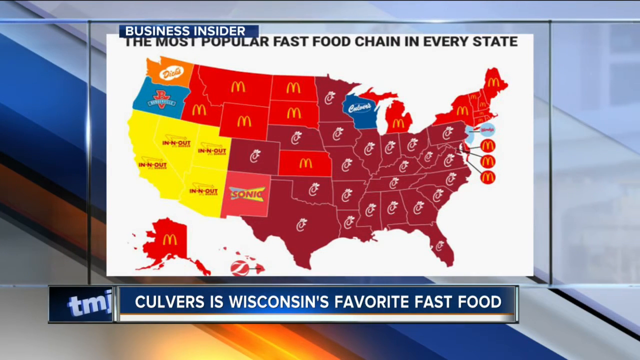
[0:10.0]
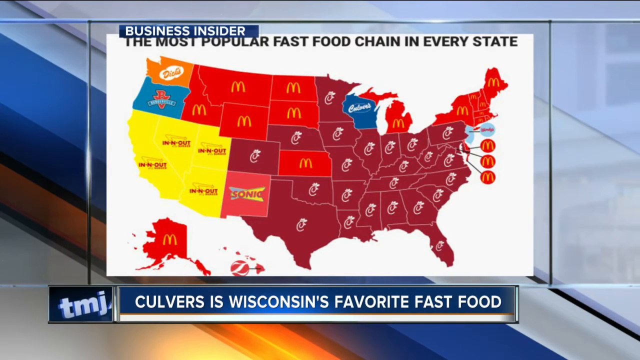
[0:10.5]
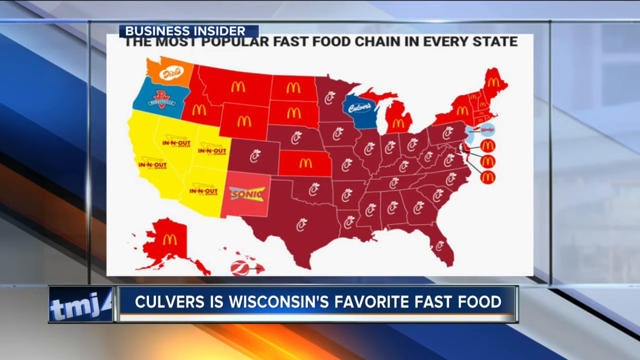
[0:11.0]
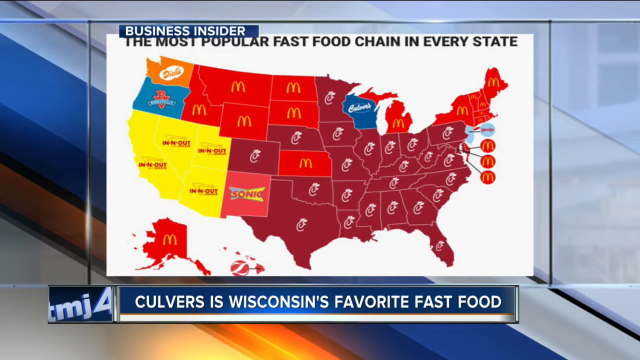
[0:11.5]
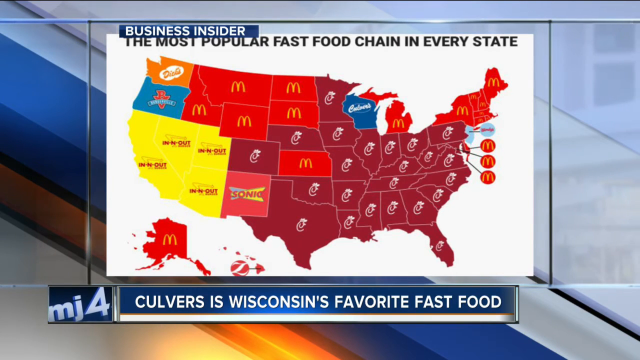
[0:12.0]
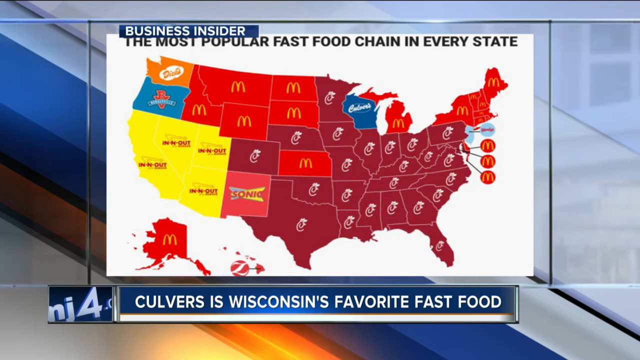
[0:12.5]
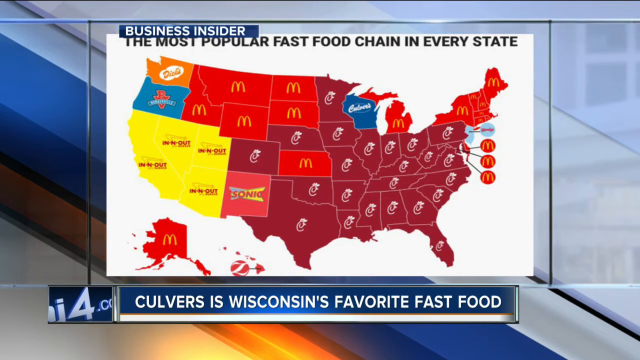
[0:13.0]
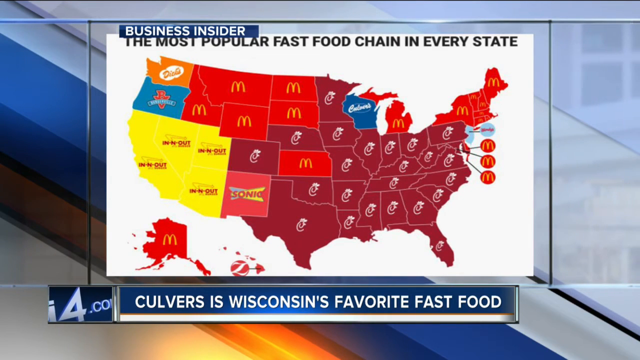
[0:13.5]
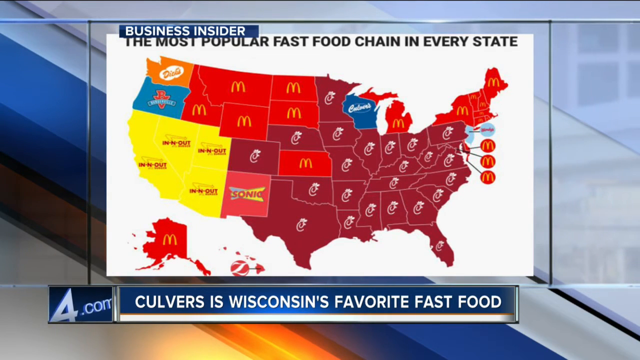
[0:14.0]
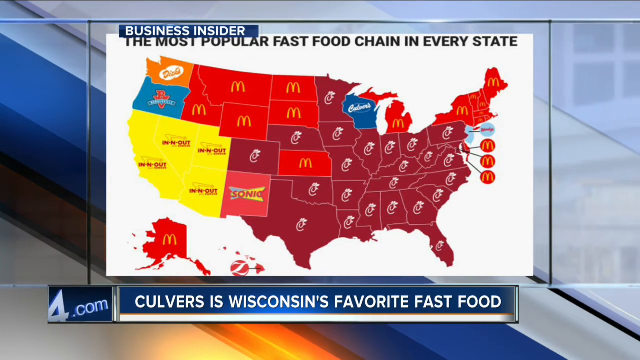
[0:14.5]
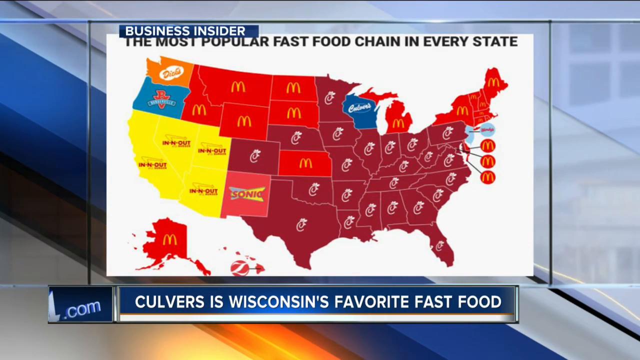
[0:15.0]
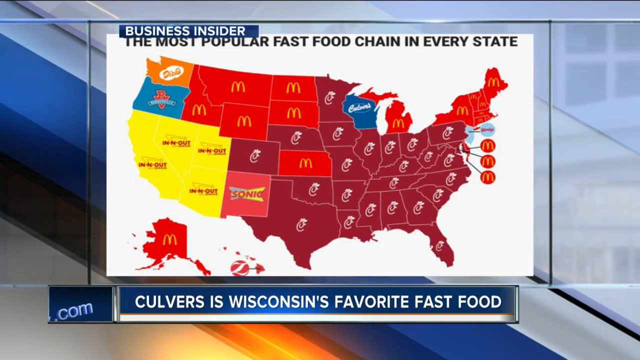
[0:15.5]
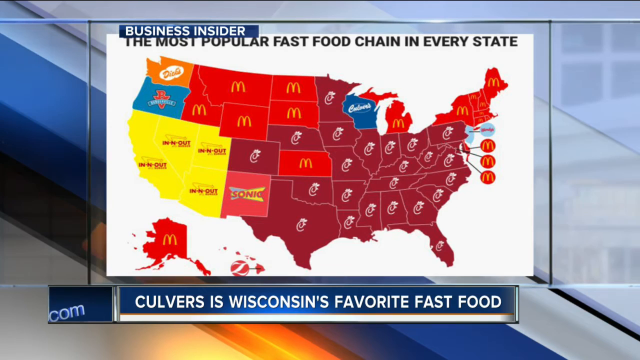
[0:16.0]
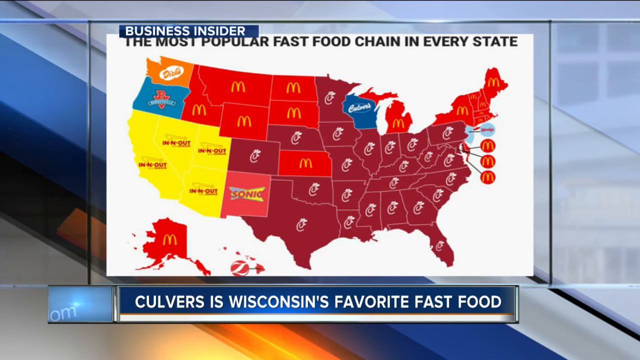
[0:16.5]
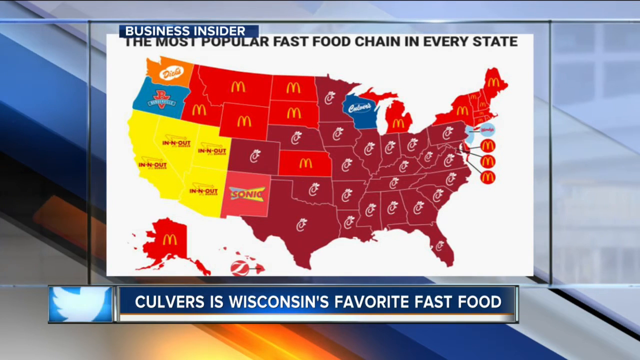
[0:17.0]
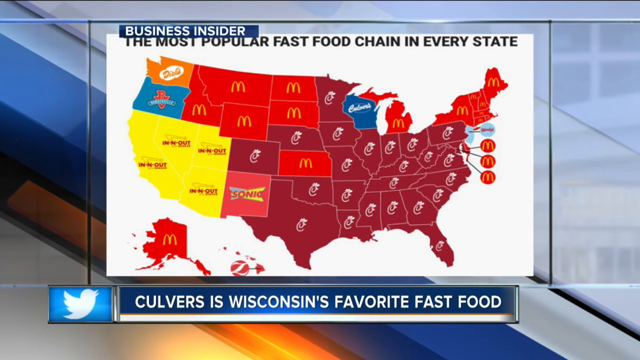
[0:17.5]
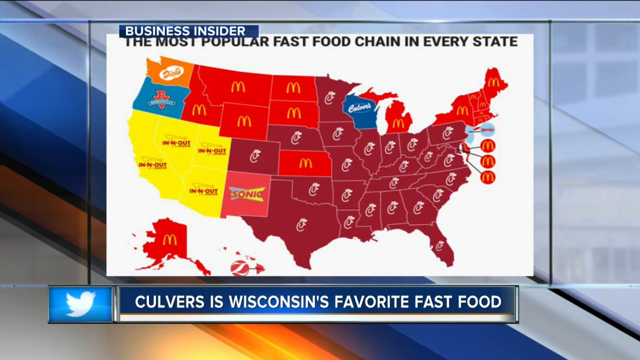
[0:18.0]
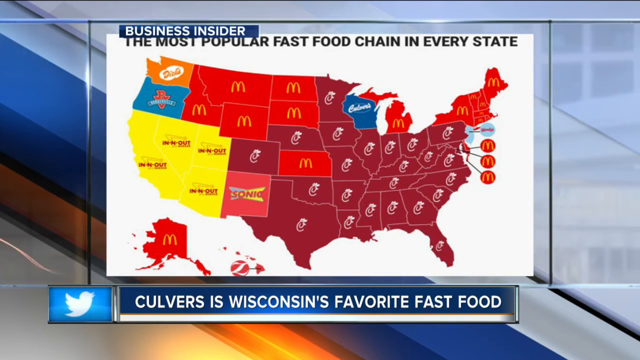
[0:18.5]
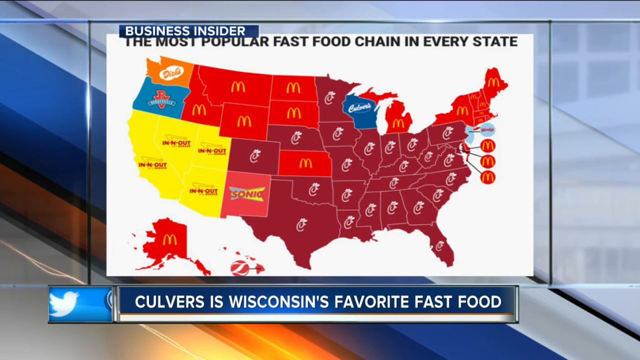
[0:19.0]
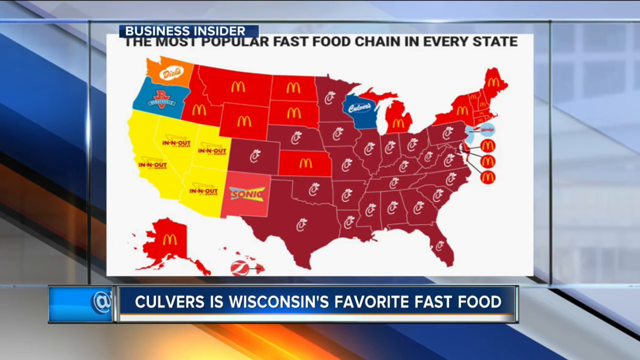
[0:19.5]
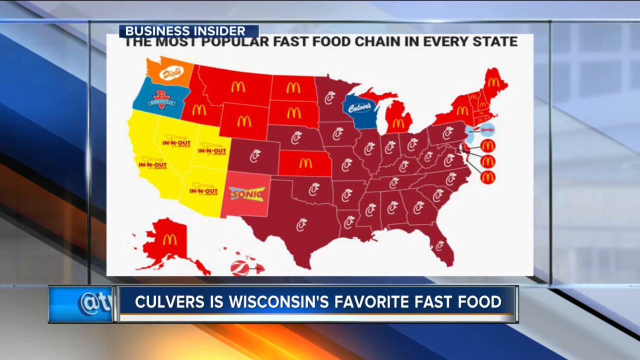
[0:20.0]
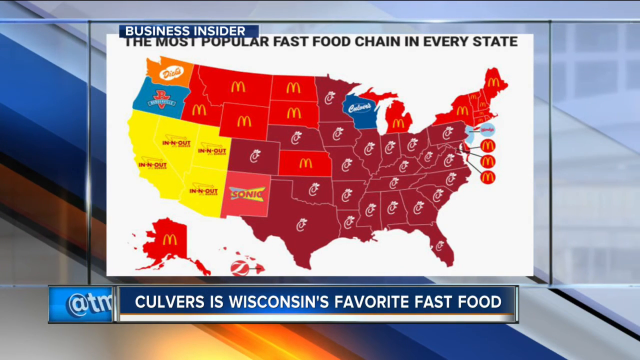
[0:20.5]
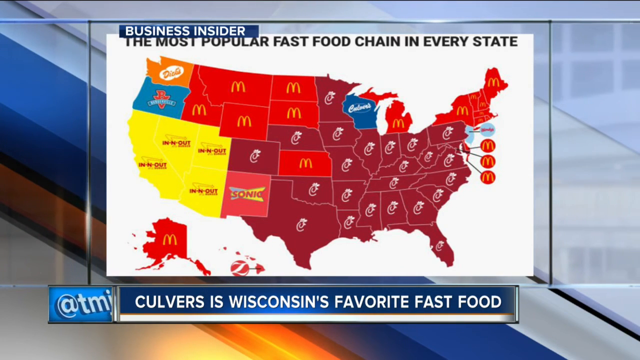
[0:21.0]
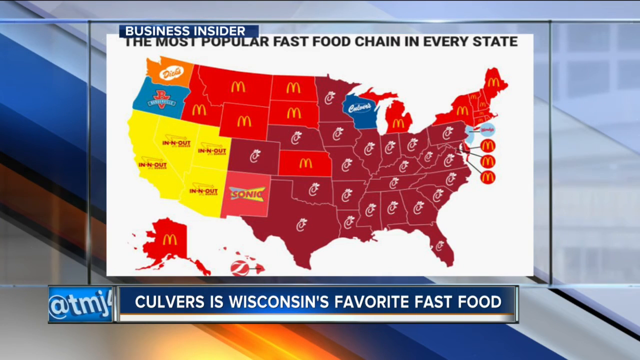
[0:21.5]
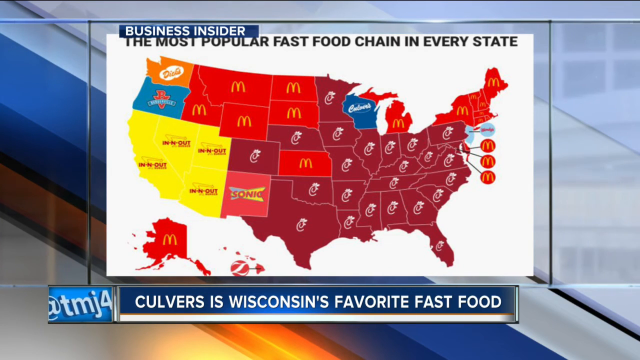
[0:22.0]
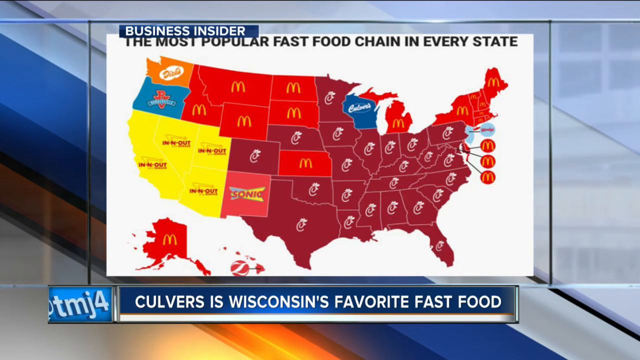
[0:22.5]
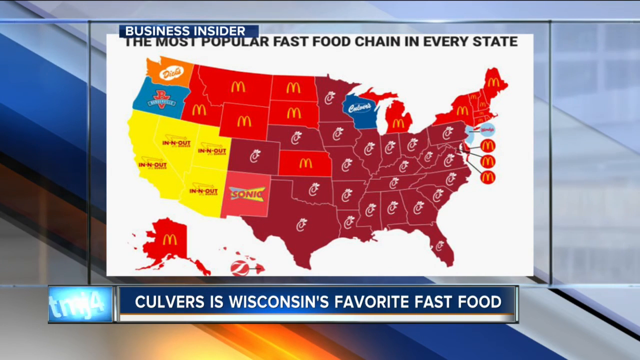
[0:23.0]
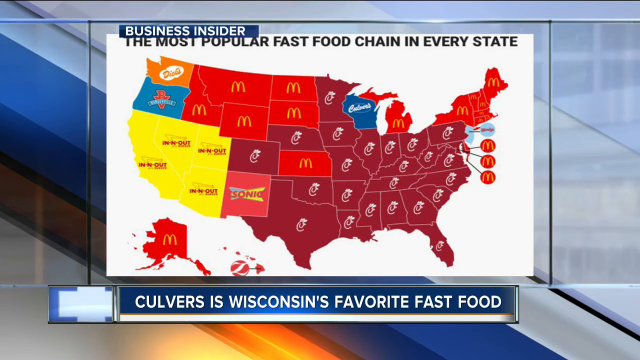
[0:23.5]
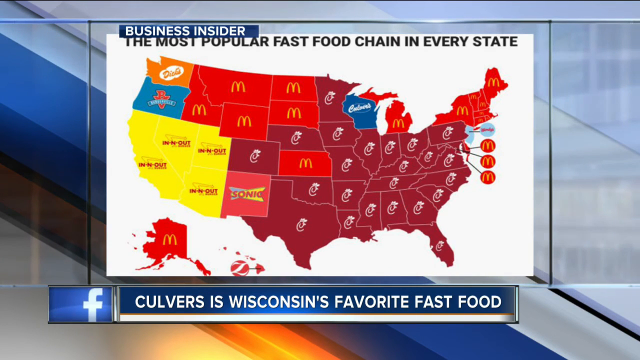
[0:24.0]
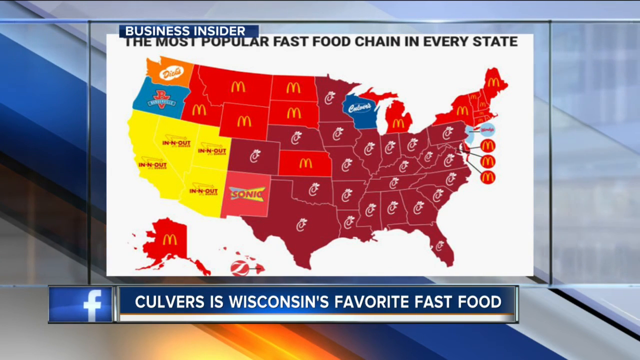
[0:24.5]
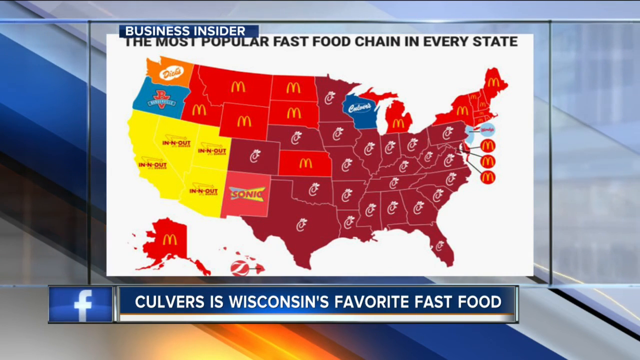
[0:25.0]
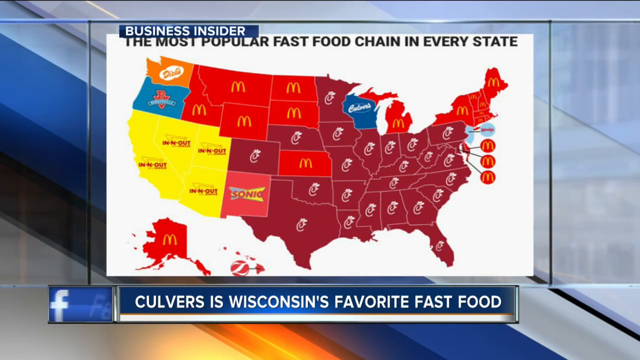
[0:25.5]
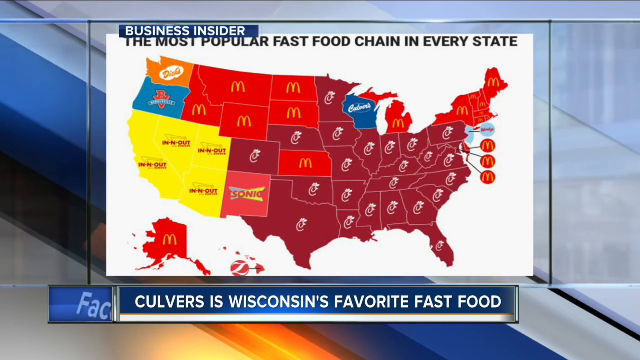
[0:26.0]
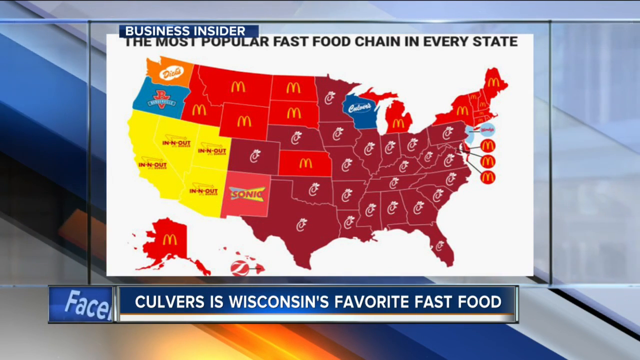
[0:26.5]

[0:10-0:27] A map of the United States is shown with text across the top reading "Business Insider, the most popular fast food chain in every state." Most of the Midwestern, eastern and southern states are maroon with a Chick-fil-A logo. The northeastern states, along with Michigan, are red with a McDonald's logo. New Jersey is light blue, but its logo cannot be made out. In the west, Montana, Idaho, Wyoming, North Dakota, South Dakota and apparently Kansas are red with a McDonald's logo. Nebraska and Colorado are maroon with a Chick-fil-A logo. New Mexico is red with a Sonic logo. California, Nevada, Utah and Arizona are yellow with an In-N-Out logo. Washington is orange with a Dick's logo. Oregon is blue with an unidentified logo. Alaska is red with a McDonald's logo, and Hawaii is a different shade of red with an unidentified logo, a white Z. Underneath, text reads "Culver's is Michigan's favorite fast food."